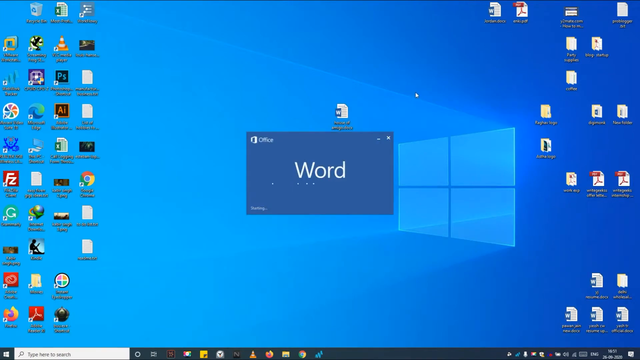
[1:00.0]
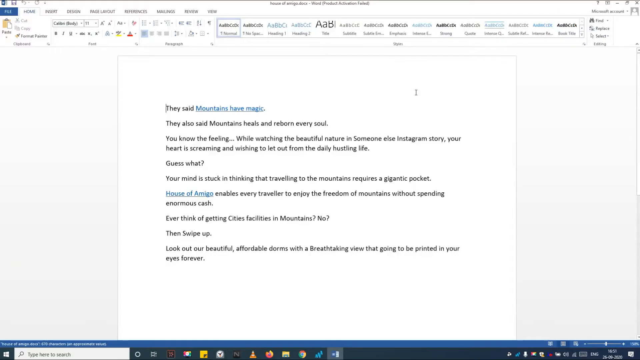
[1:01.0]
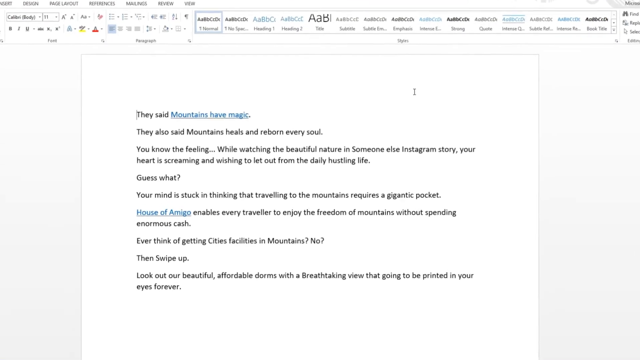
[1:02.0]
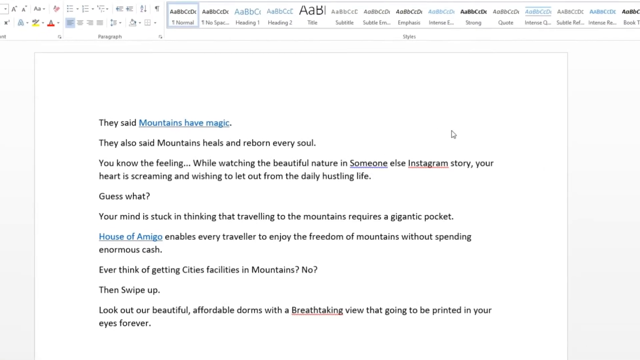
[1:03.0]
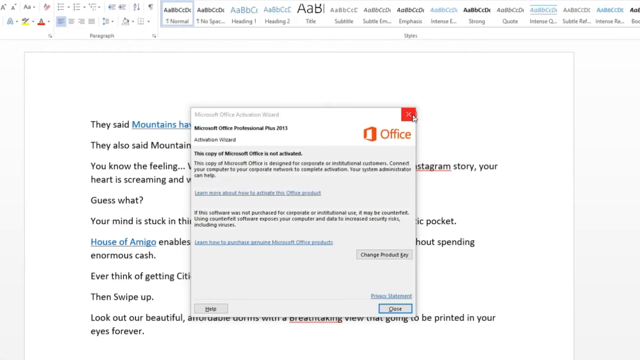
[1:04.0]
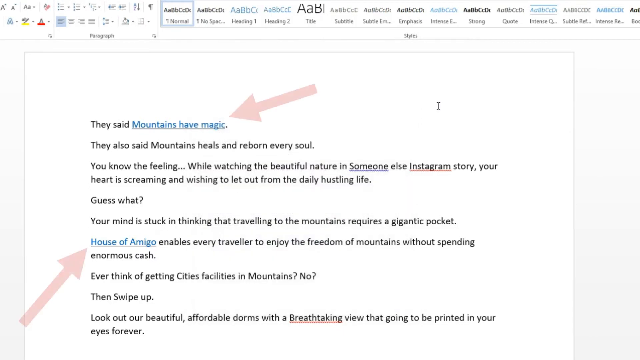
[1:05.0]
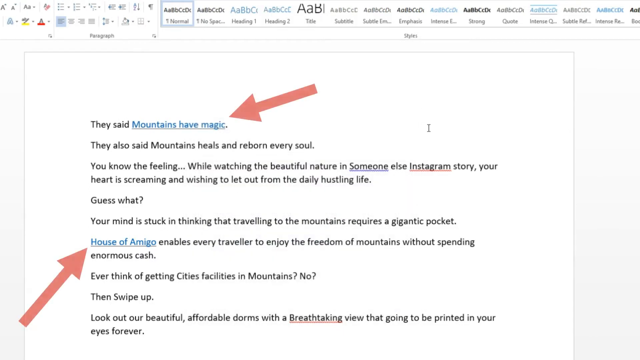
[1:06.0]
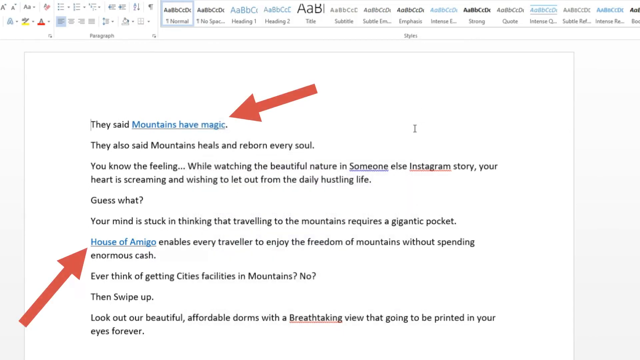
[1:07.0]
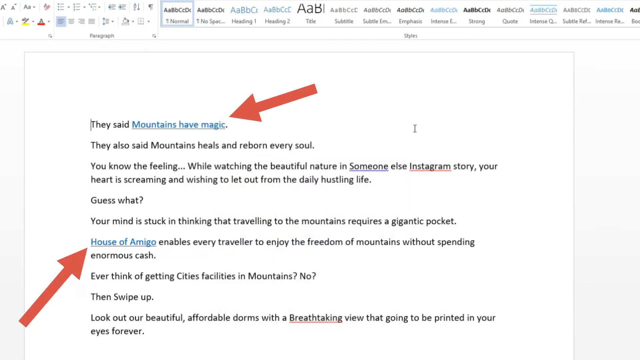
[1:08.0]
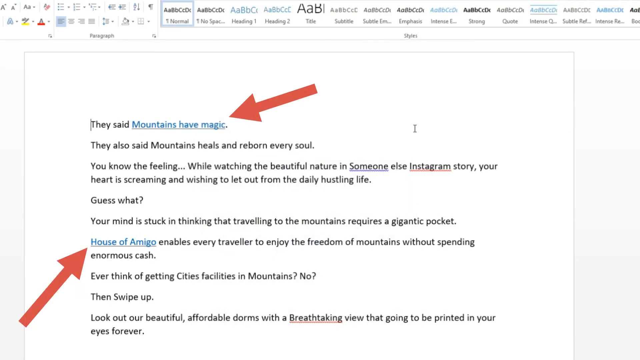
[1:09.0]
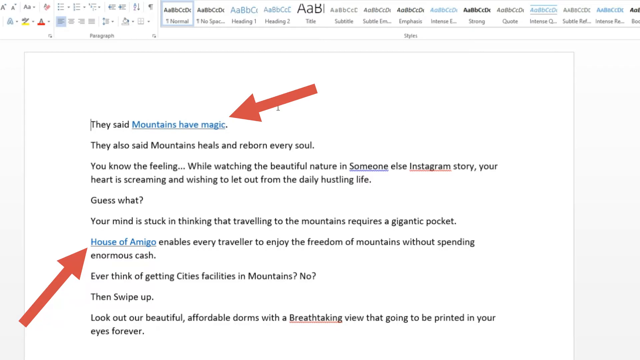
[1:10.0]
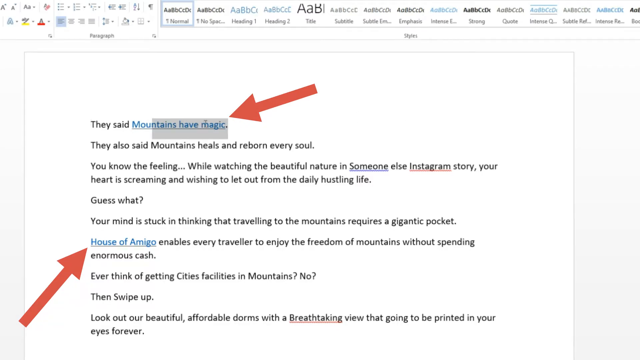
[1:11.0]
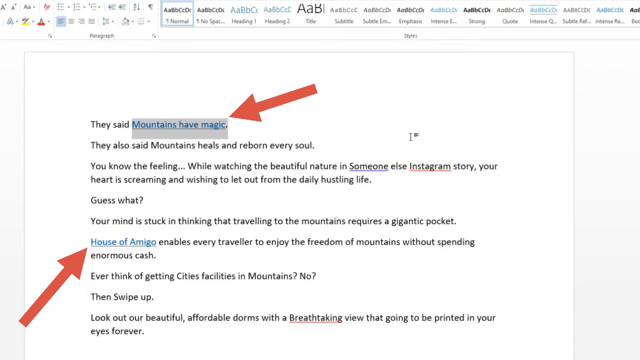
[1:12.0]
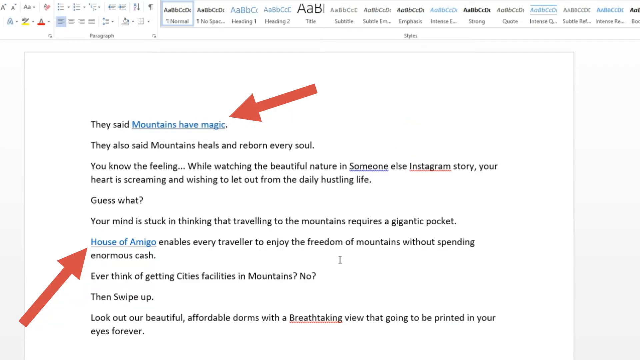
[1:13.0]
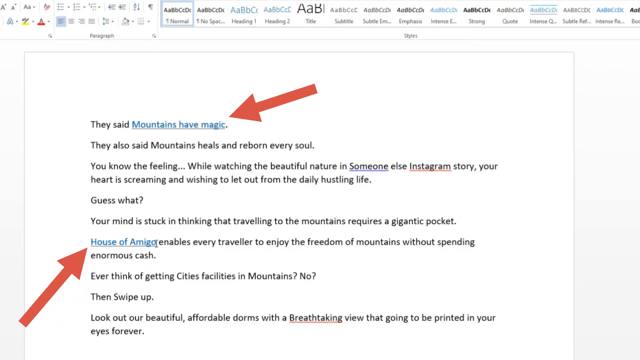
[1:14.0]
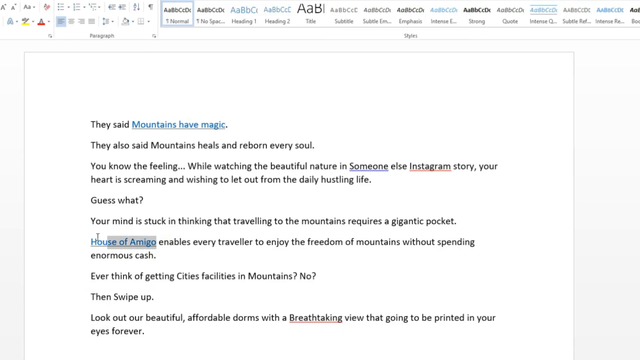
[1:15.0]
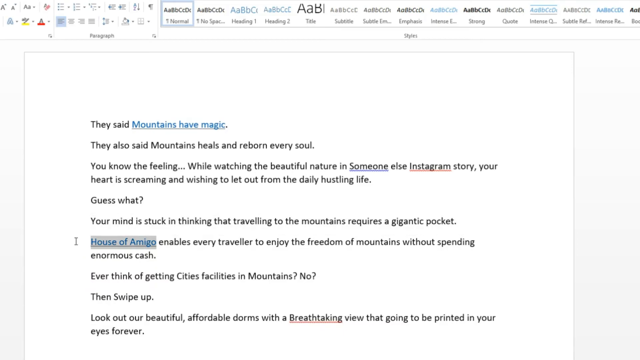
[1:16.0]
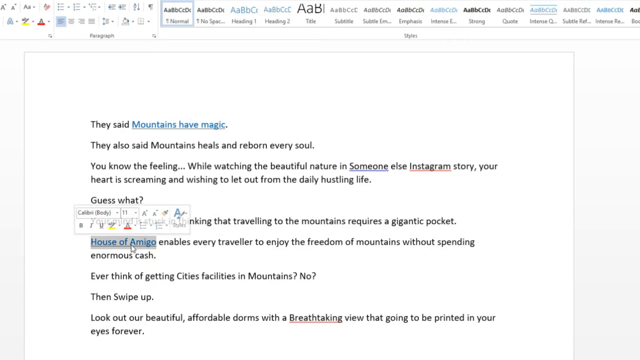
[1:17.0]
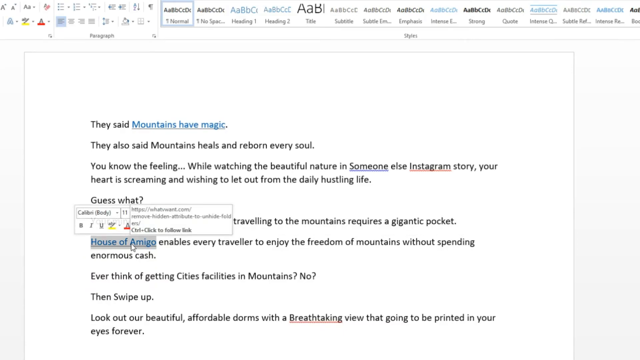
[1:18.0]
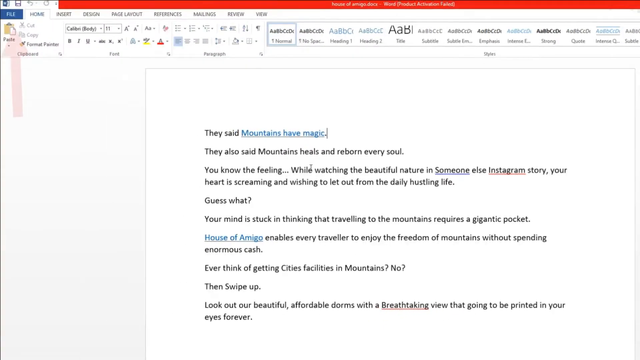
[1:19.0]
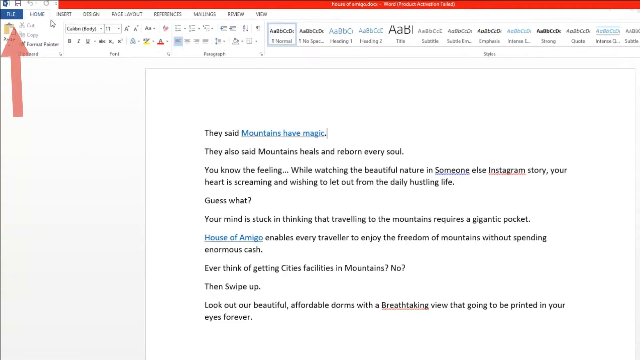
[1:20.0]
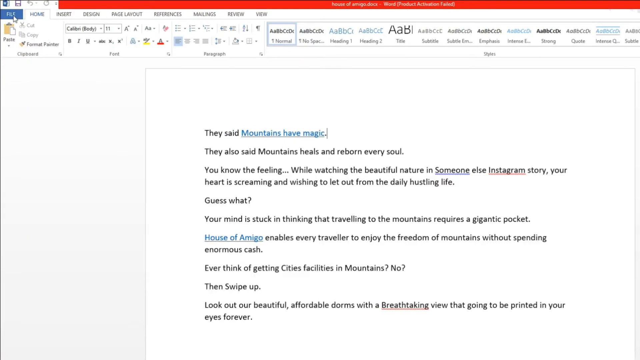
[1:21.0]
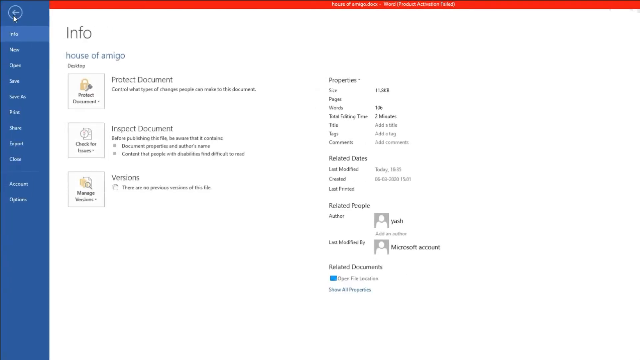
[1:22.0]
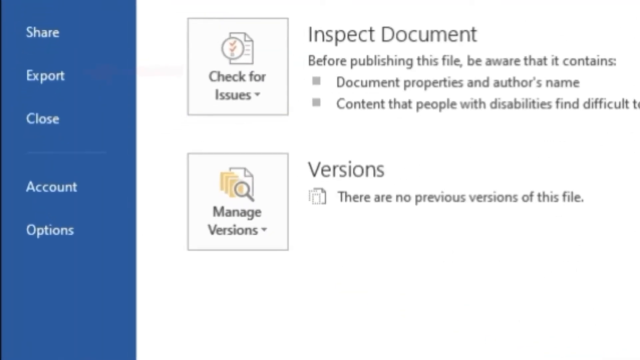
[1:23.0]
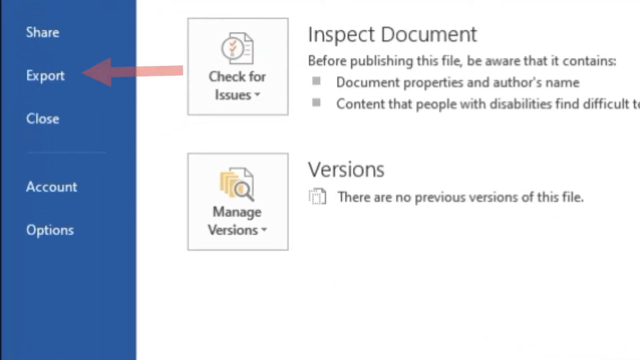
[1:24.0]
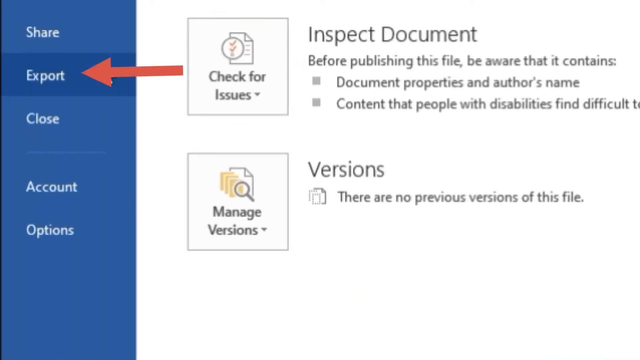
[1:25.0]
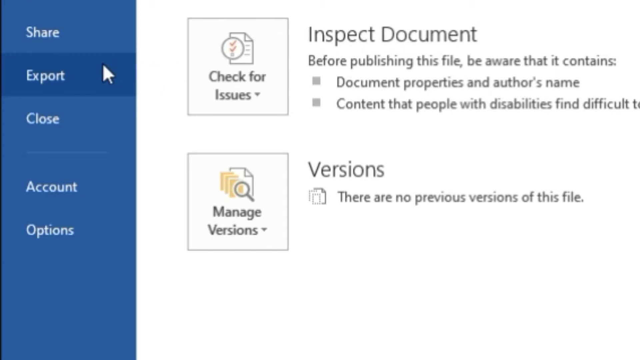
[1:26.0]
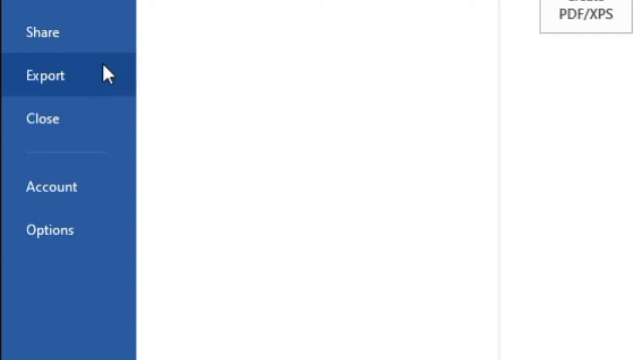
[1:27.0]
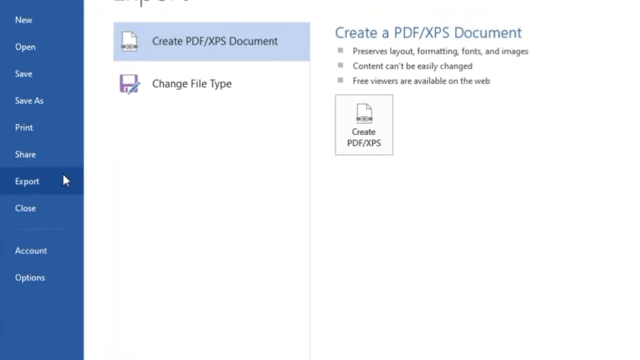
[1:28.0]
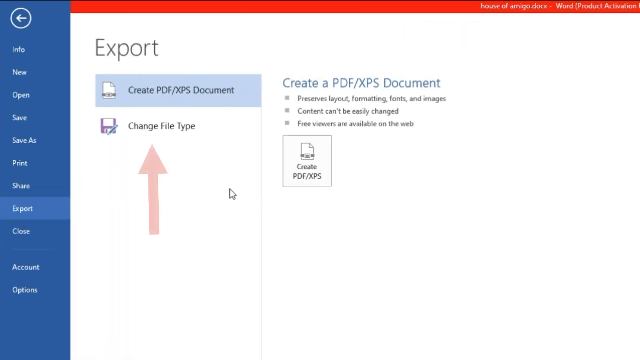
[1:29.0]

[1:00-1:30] The desktop shows four columns of about 15 rows of icons arranged in rows on the left side, and more sparsely scattered icons on the right side, including some folders and documents. Microsoft Word loads, with a blue screen in the middle, and then the Microsoft Word screen appears. The view zooms into the center of the document's text, which reads "they said mountains have magic", where "mountains have magic" is a hyperlink in blue underlined text, then "they also said mountain heals and reborn every soul", and the text continues. Another hyperlink, "house of amigo", is in blue text in the middle of the page. A pop-up appears reading "microsoft office activation wizard", "microsoft office professional plus 2013" and "this copy of microsoft office is not activated"; the close button is pressed, marked by a small circular red highlight. Two red arrows then point on the document toward the blue hyperlinks. The cursor selects the first hyperlink, then selects the second before deselecting it. A red arrow appears at the top left of the screen on File, and the user presses File. The view zooms into the middle left of the screen, which says "export", with a red arrow on the export button; the user clicks it, then clicks another button in the middle of the screen.